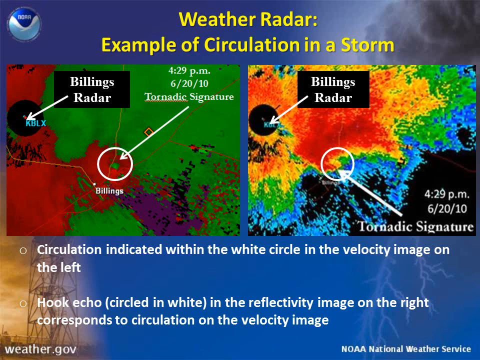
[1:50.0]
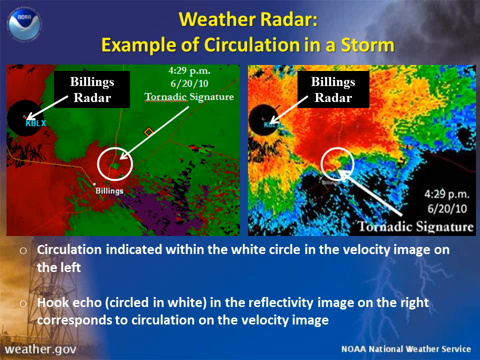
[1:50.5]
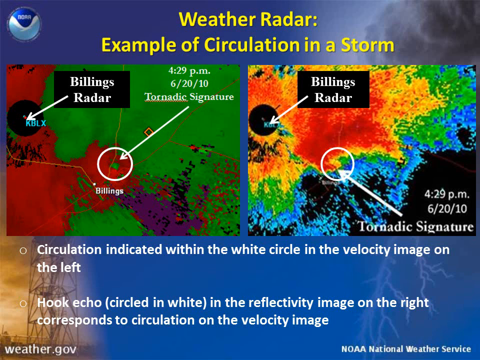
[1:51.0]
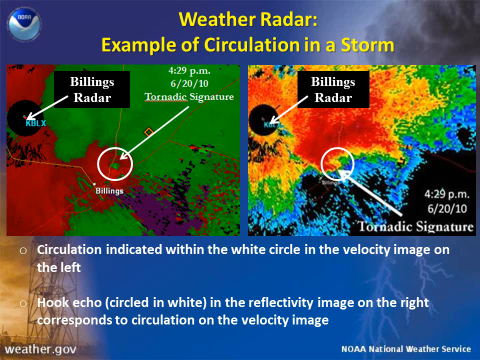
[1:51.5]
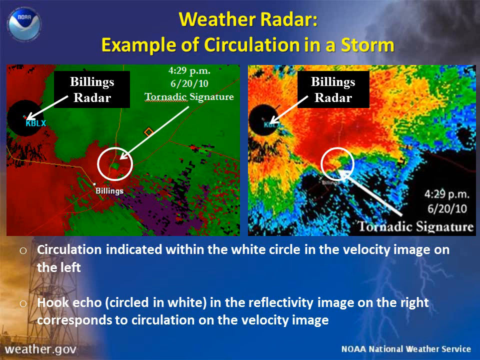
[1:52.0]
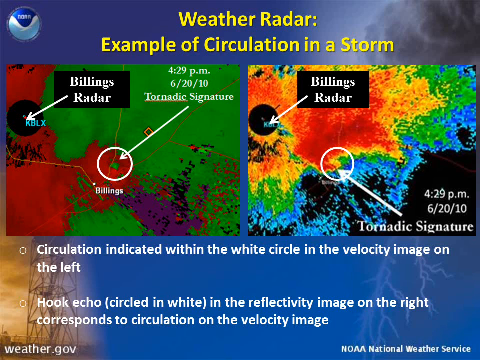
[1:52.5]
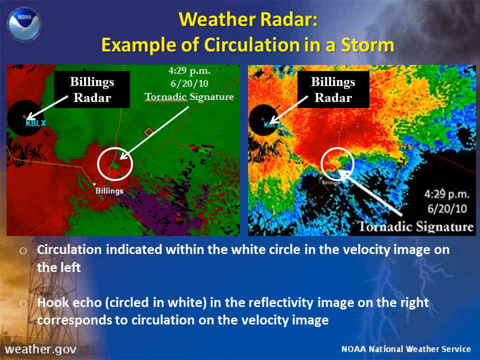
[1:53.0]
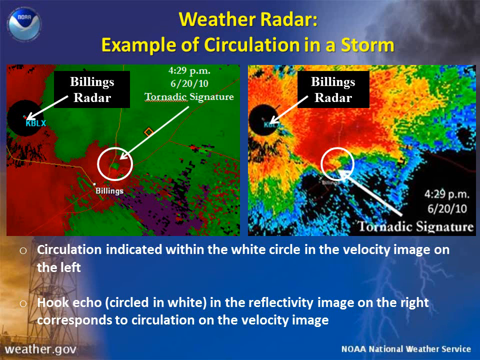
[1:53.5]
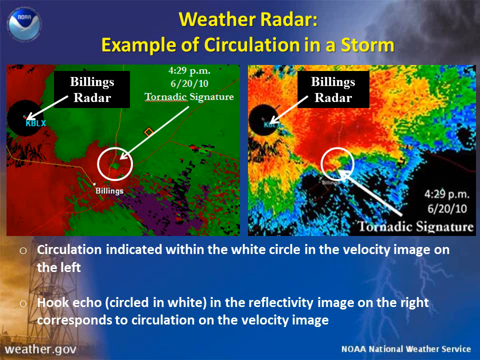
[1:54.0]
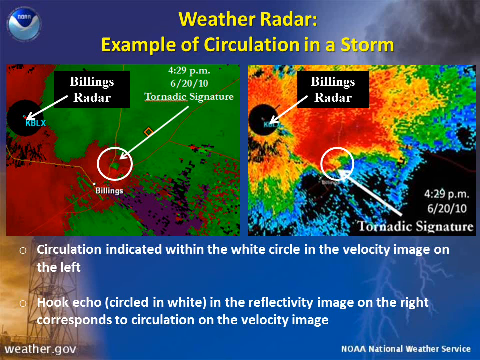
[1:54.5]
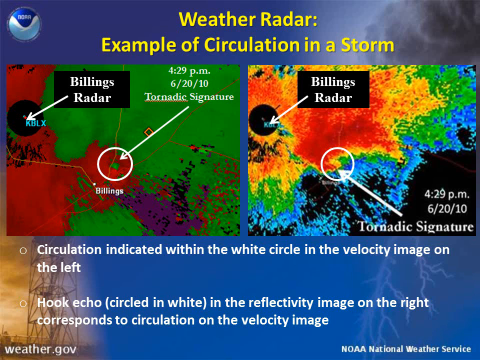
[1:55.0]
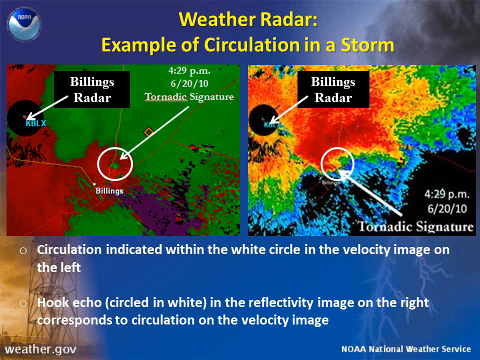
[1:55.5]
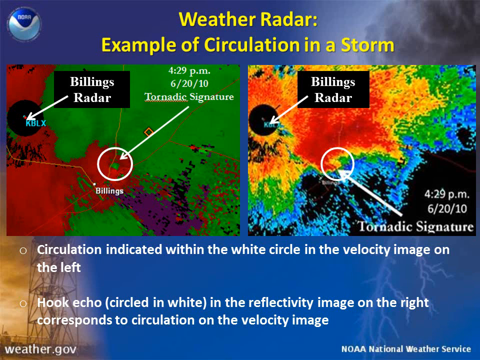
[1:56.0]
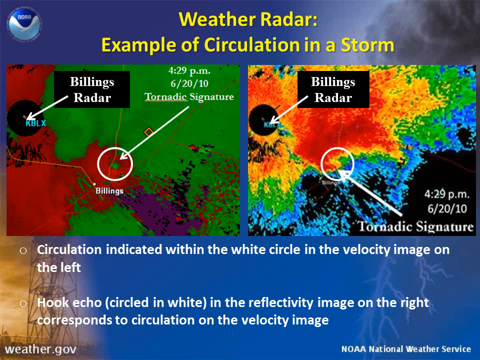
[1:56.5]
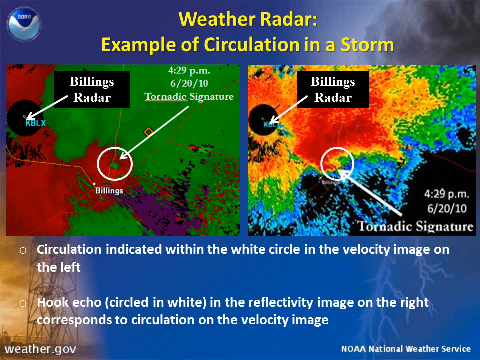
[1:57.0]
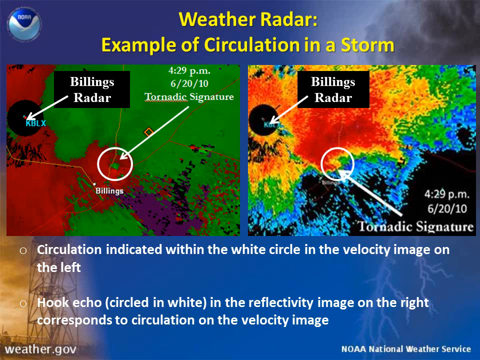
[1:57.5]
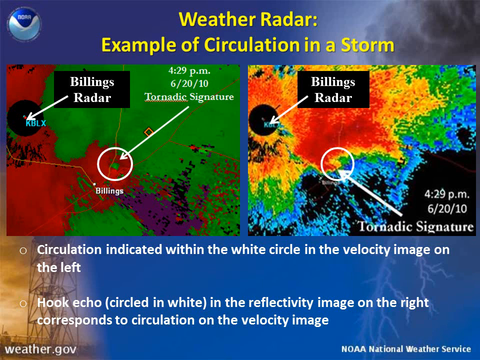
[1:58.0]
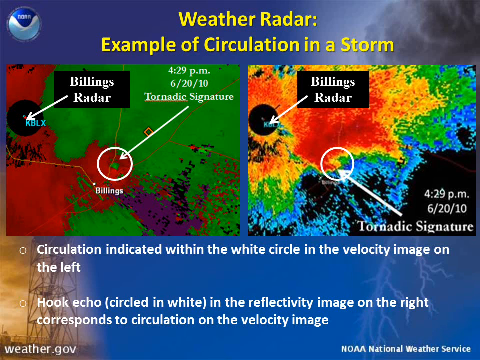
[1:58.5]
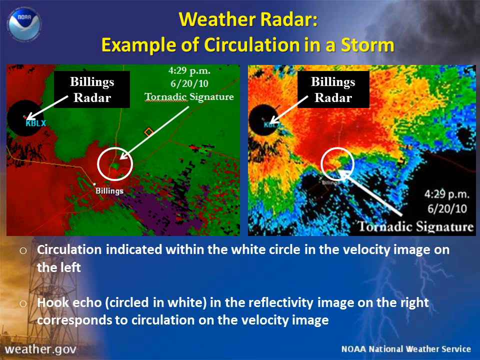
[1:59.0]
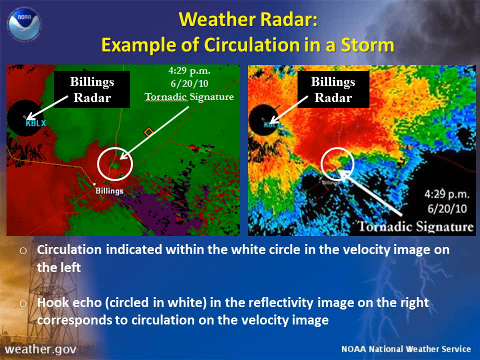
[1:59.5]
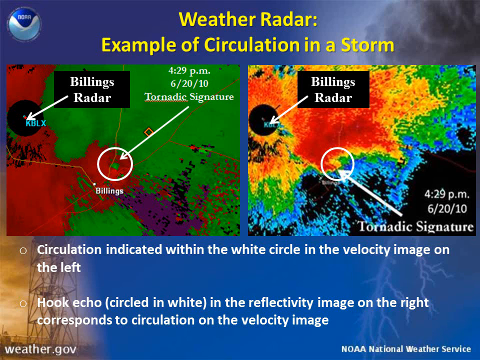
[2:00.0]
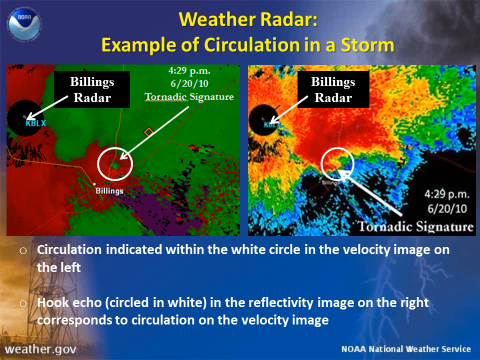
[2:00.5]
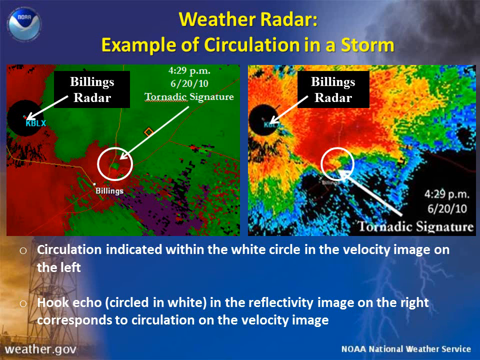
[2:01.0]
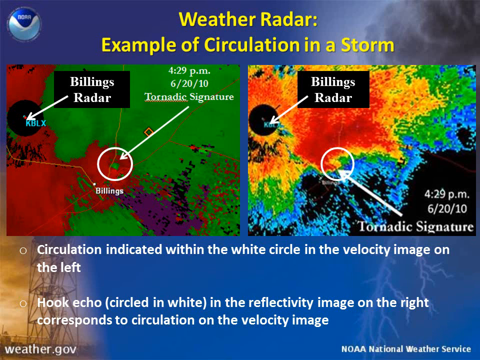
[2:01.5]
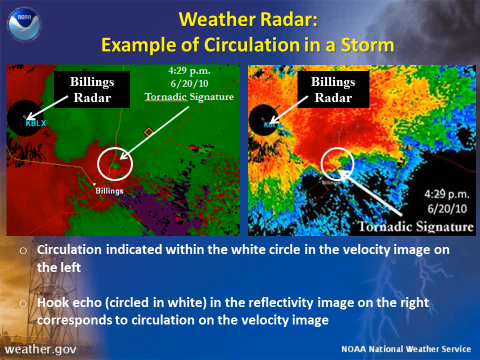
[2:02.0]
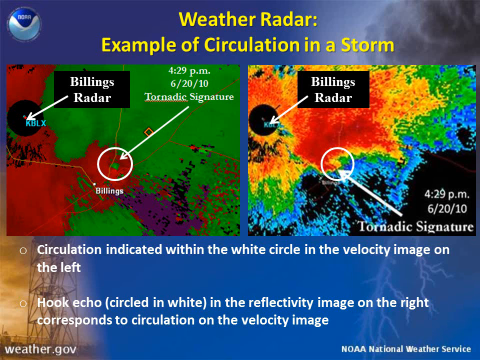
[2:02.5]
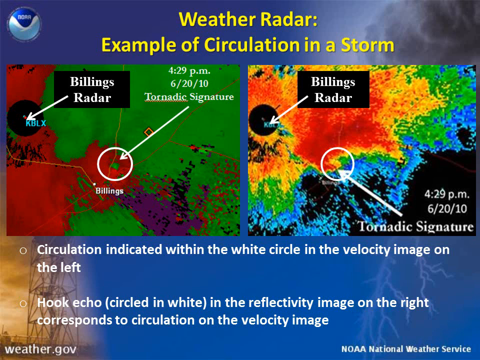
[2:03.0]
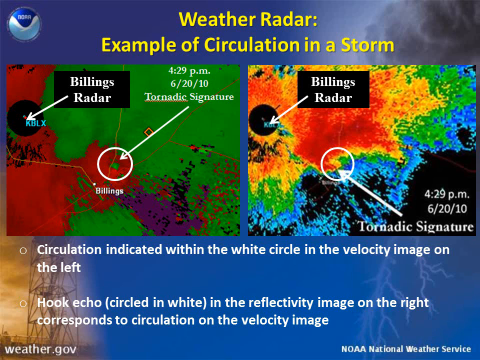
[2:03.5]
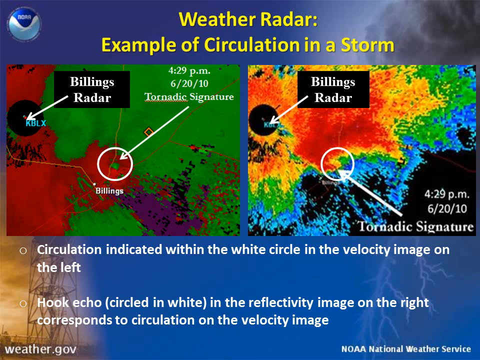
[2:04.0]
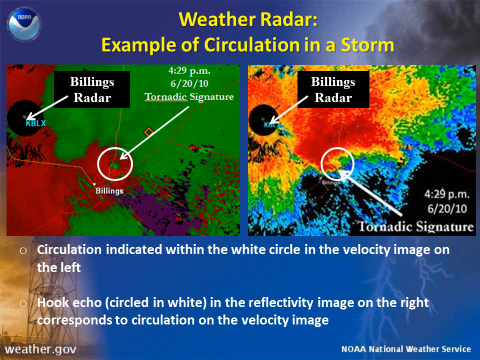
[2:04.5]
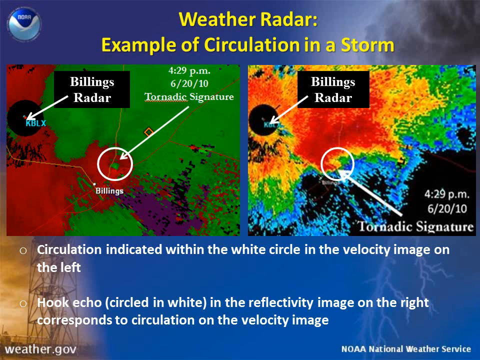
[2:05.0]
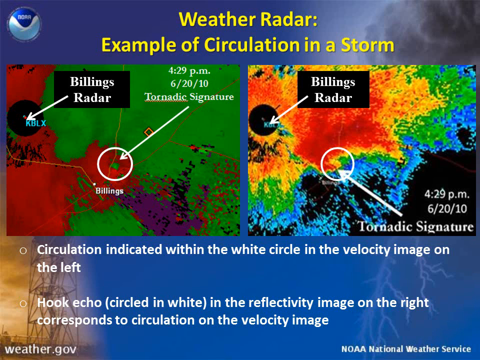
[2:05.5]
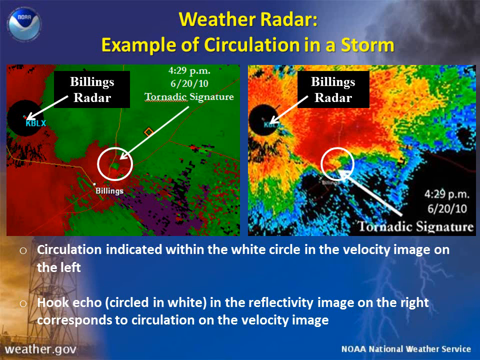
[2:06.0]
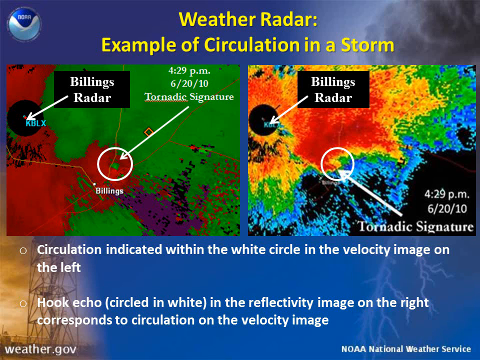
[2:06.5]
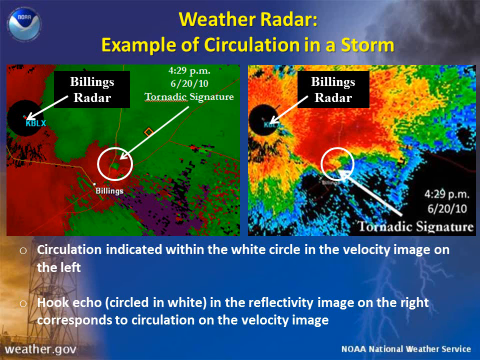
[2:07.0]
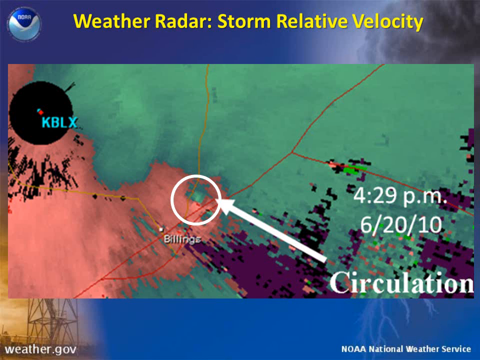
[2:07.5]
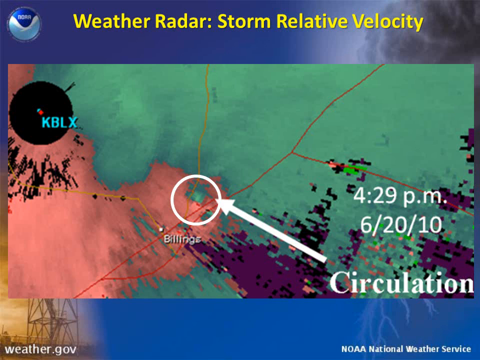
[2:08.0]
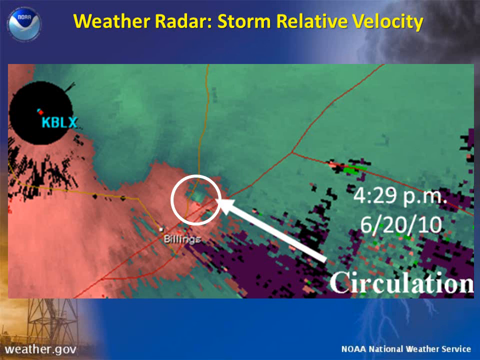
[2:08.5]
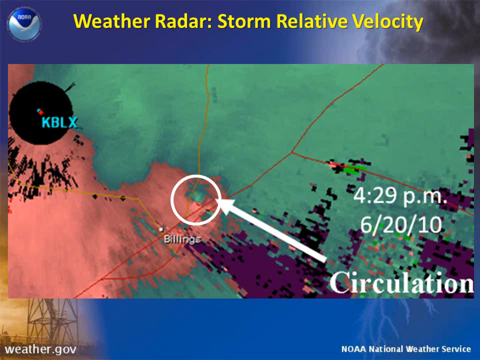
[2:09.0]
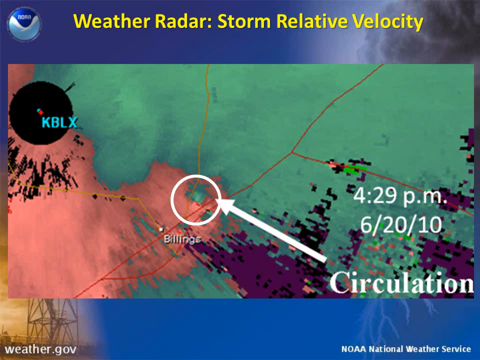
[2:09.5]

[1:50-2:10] A slide looks to be from a weather class. Its background has a cloud in the top right corner, lightning bolts coming down in the bottom right corner, a dark blue gradient hue through the middle, and kind of an orangish hue in the bottom left. Two square radar images show the Billings radar. In the left square, a green patch takes up about two-thirds and a red patch about one-third; a dot is labeled as the Billings radar, and another circle circles a point on the radar. The right square has different colors: a dark red patch in the center outlined by kind of an orangish hue, a greenish patch around that, and a light bluish patch on the outer layer. Beneath them are two bullet points with white text; the first reads "circulation indicated within the white circle velocity image on the left," with more text beneath it. Next comes another radar image titled "weather radar storm relative velocity," with a kind of whitish green patch and a pinkish patch on the left side.